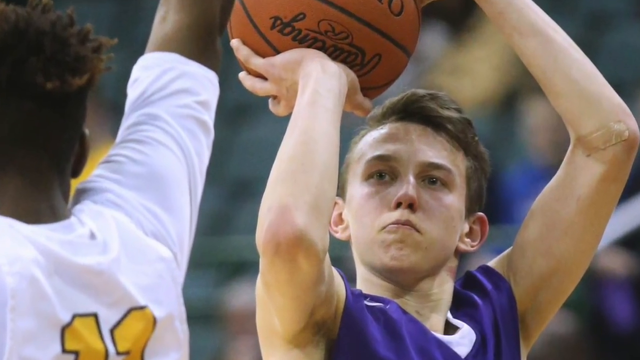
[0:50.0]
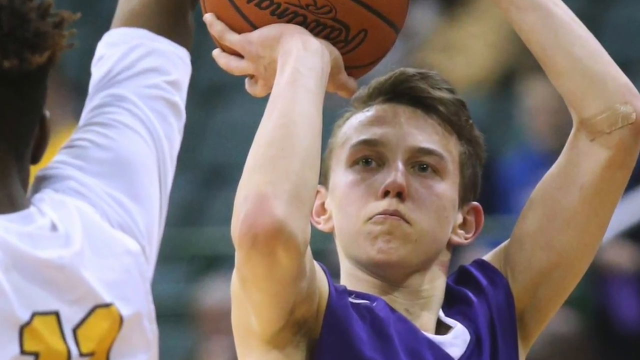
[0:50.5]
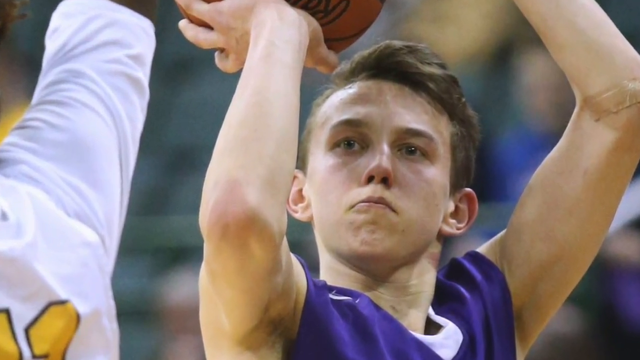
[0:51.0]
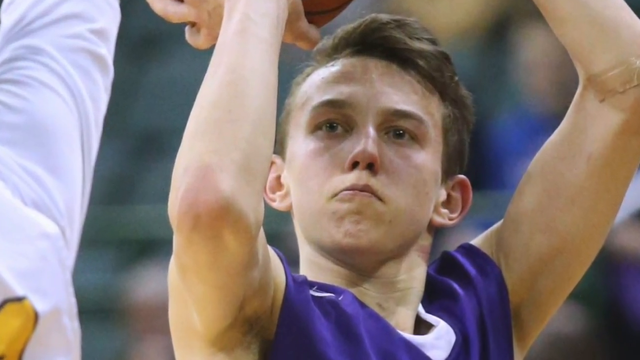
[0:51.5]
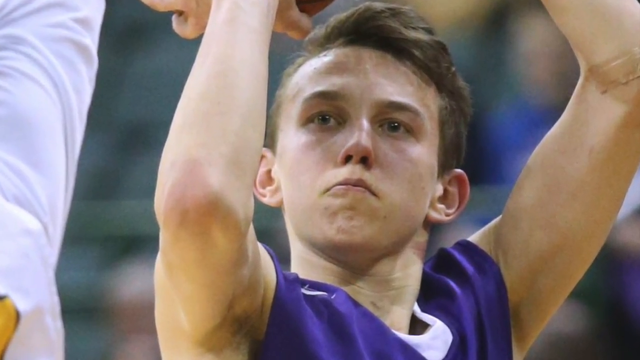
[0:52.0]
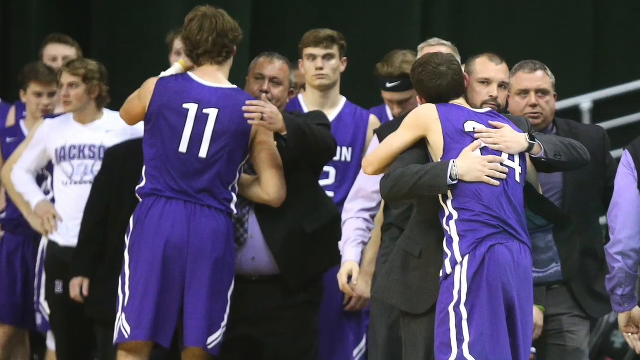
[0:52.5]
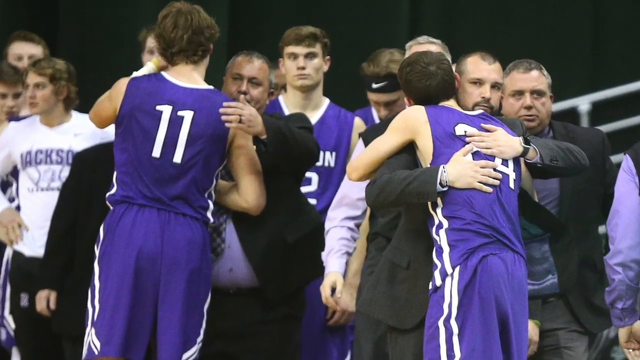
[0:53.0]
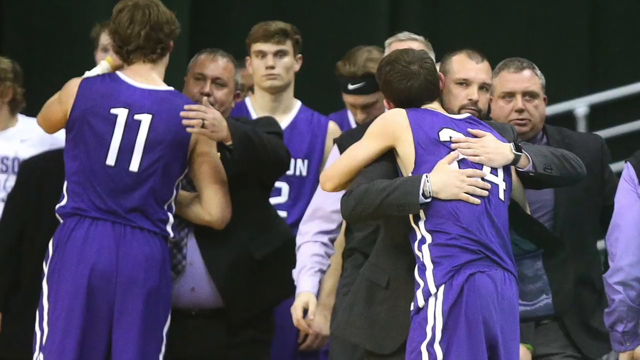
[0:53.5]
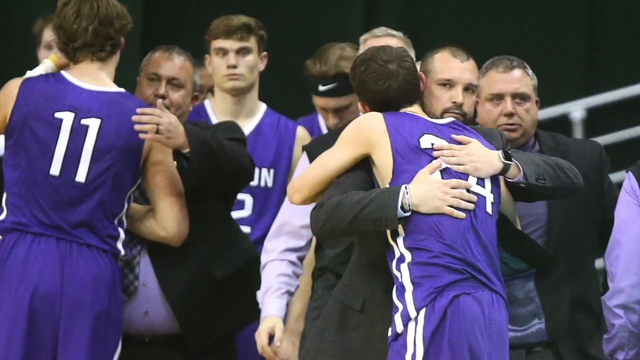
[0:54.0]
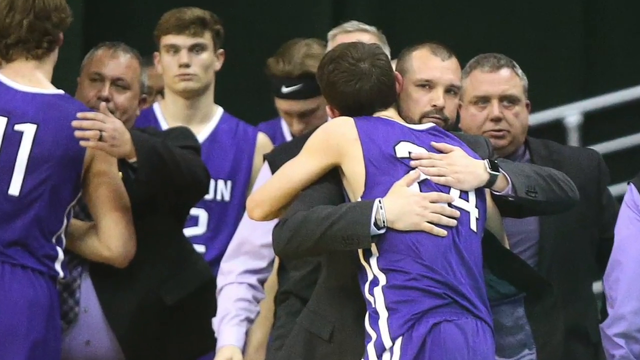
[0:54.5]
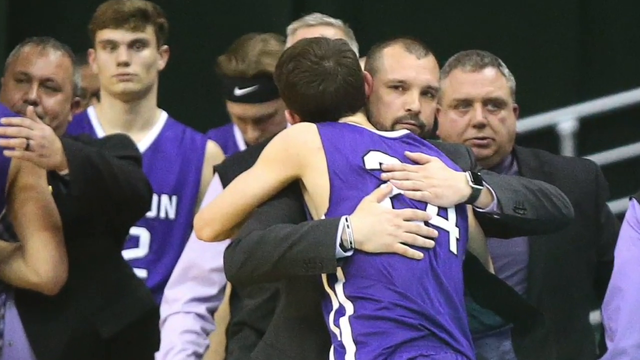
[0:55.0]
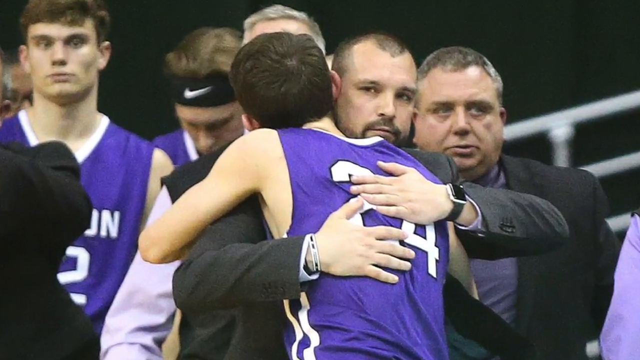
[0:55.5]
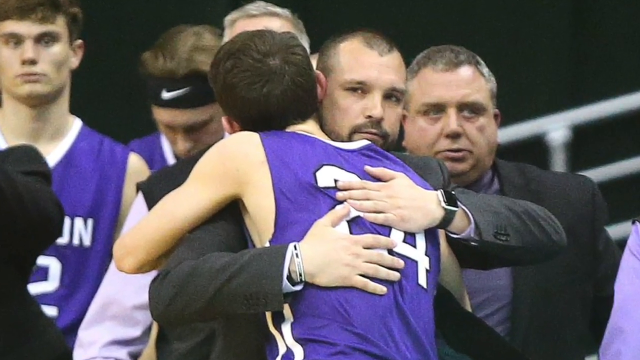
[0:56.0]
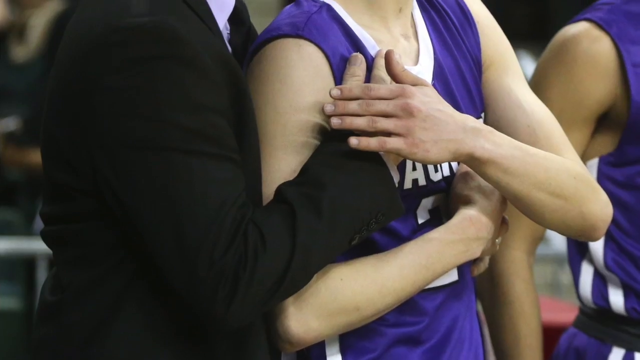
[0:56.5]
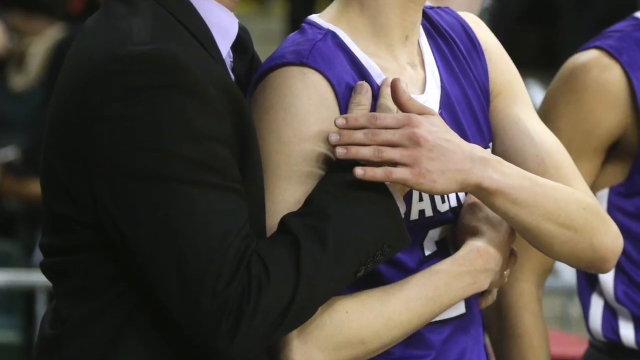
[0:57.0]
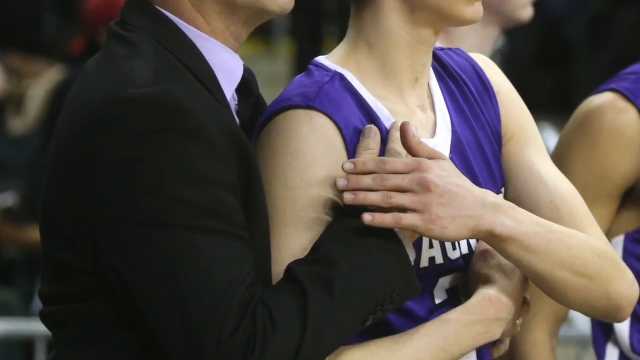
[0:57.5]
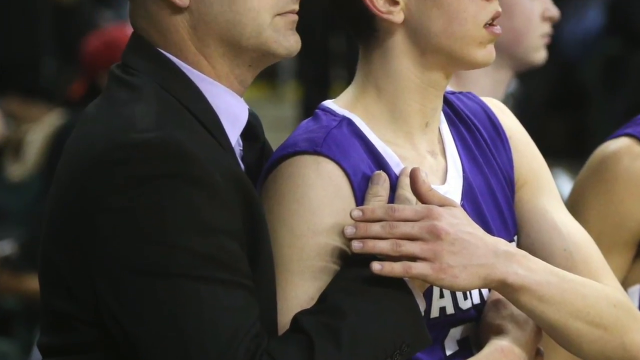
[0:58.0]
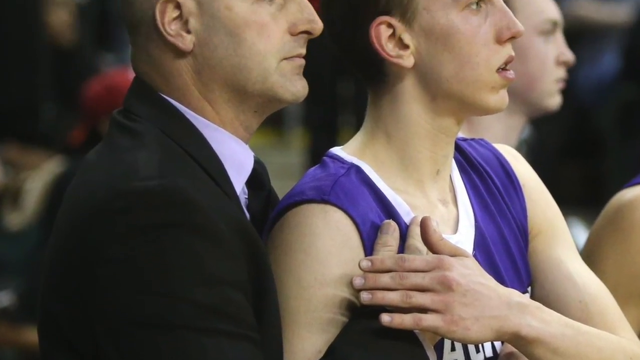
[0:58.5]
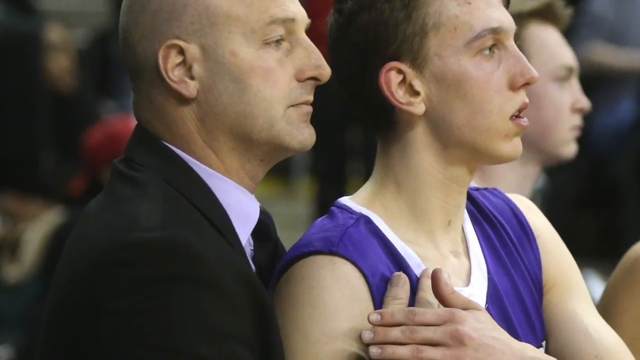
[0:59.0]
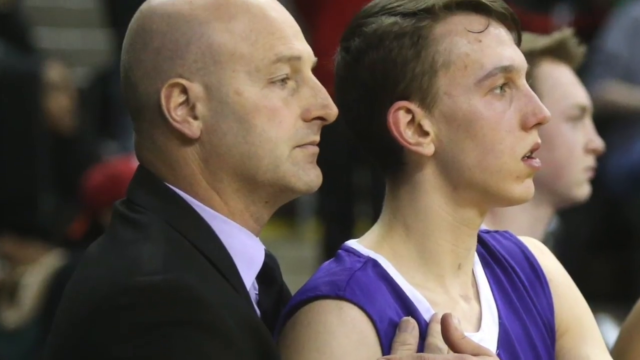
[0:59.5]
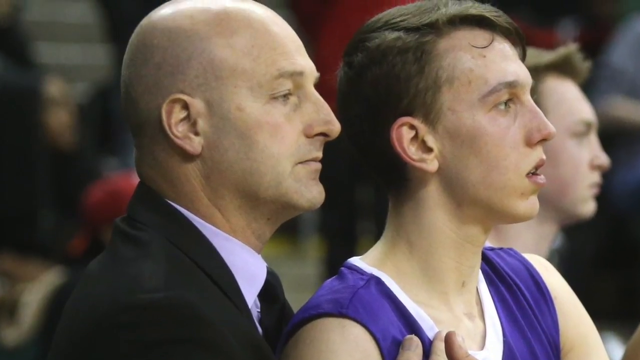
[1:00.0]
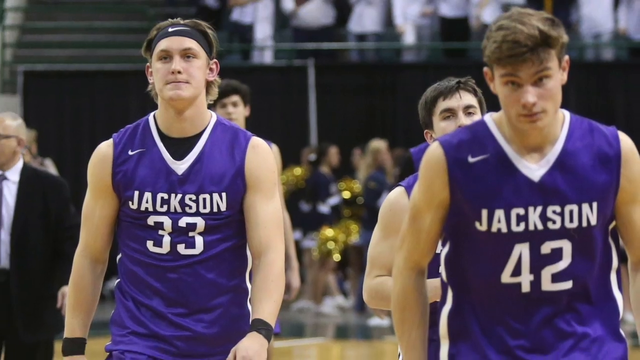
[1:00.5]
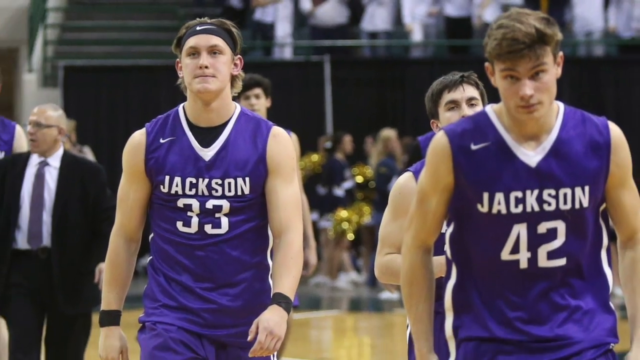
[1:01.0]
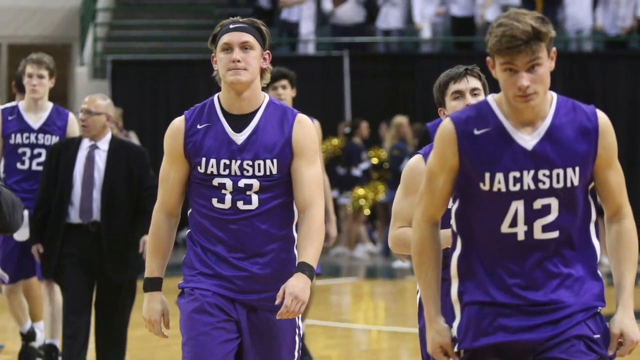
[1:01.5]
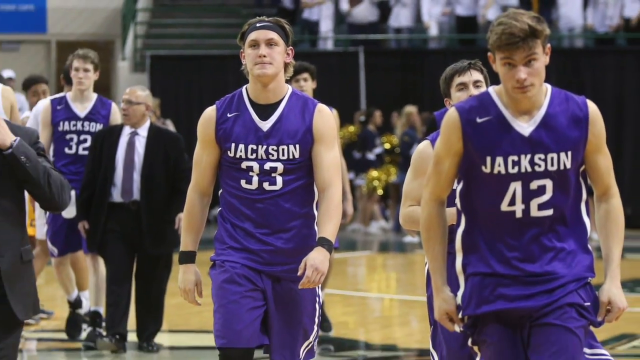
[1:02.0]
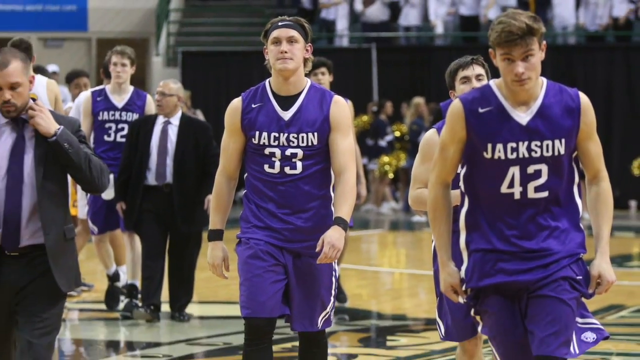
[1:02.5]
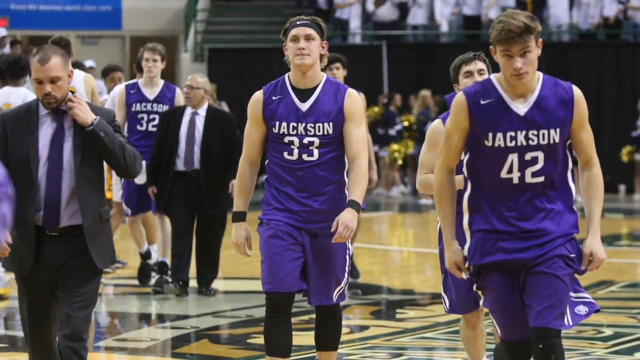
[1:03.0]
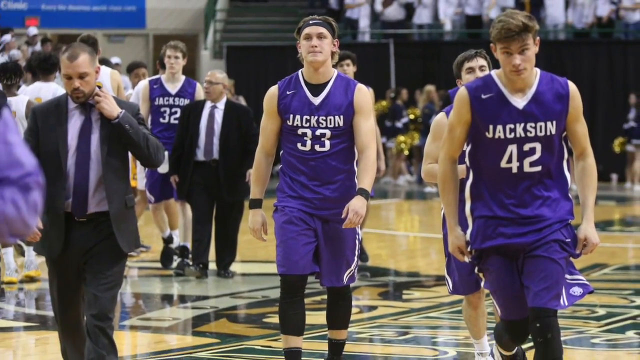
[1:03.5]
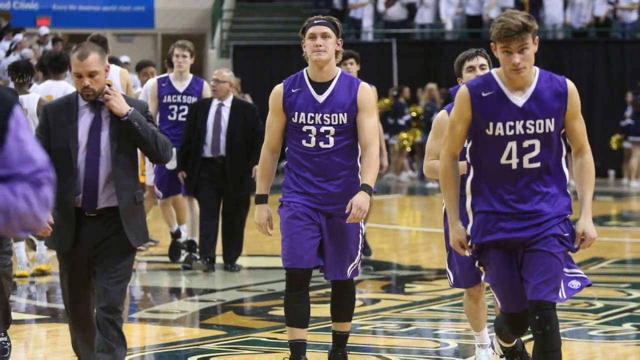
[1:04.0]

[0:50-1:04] A picture of the sidelines shows Jackson players, two of them with their backs turned, looking to be hugging coaches in suits. More players are in the background, one in a white warm-up shirt and others in jerseys. Another shot shows a Jackson player with his hand on top of the coach's hand, which is on his chest. The camera moves up to show the coach, who wears a suit and has a bald white head; both are watching the game. Another shot shows Jackson players facing the camera, numbers 42 and 33, with 33 wearing a black Nike headband. Cheerleaders are in the far background along with some men in suits, and a bit of the white team is visible in the background; everyone looks to be walking off the court.